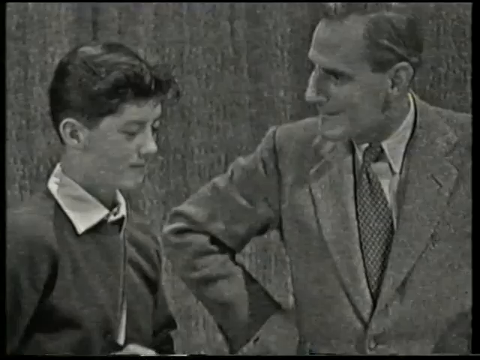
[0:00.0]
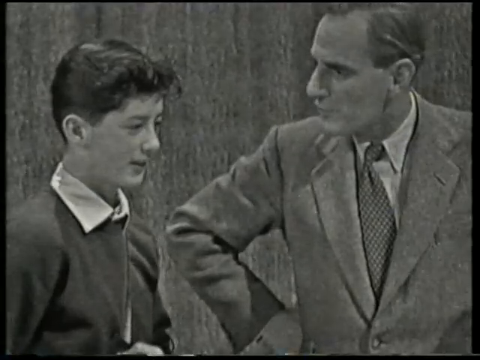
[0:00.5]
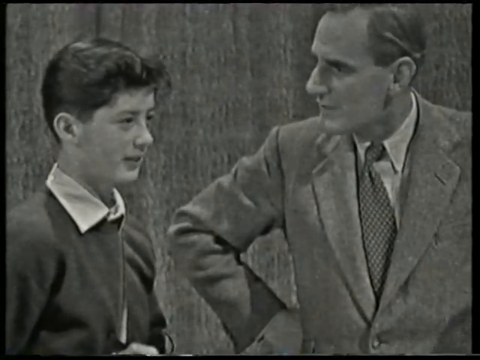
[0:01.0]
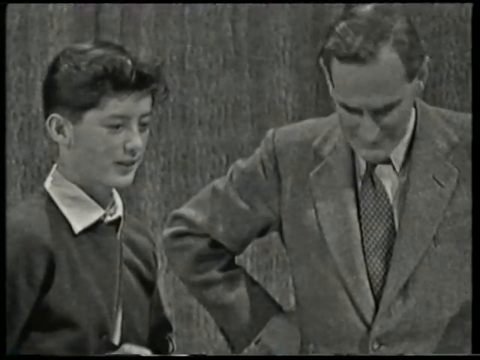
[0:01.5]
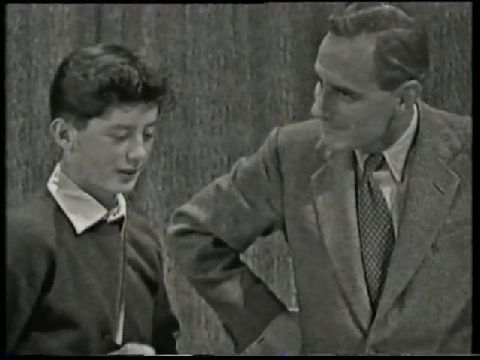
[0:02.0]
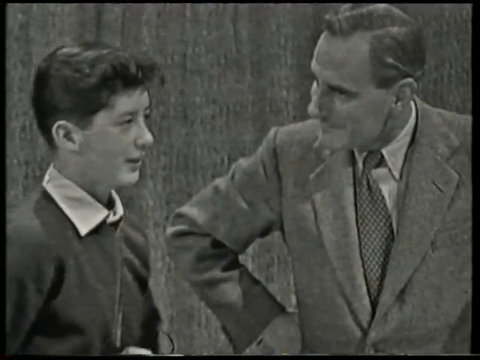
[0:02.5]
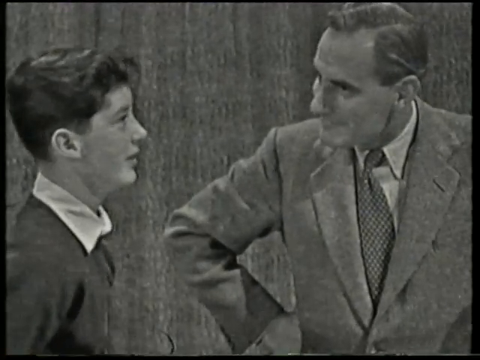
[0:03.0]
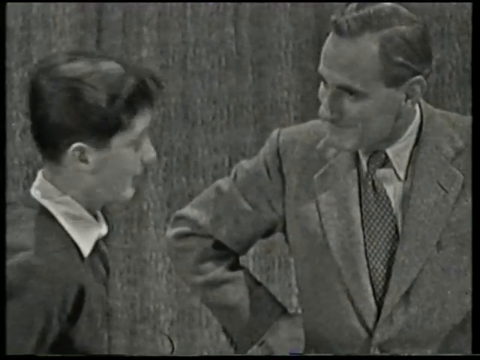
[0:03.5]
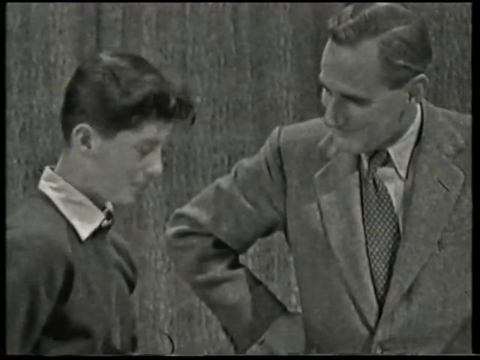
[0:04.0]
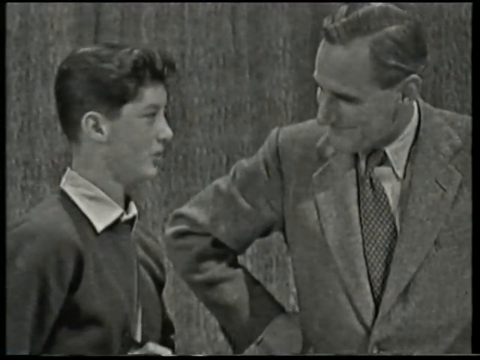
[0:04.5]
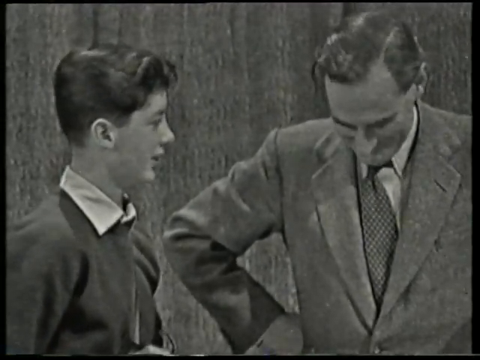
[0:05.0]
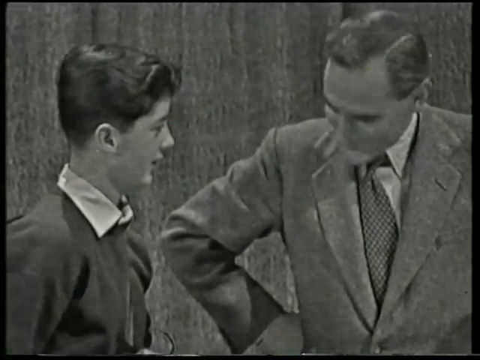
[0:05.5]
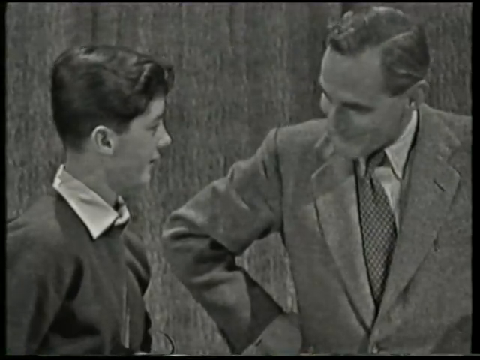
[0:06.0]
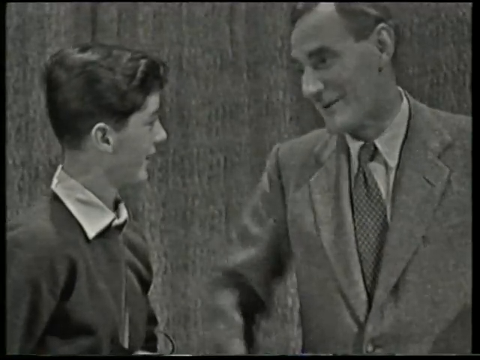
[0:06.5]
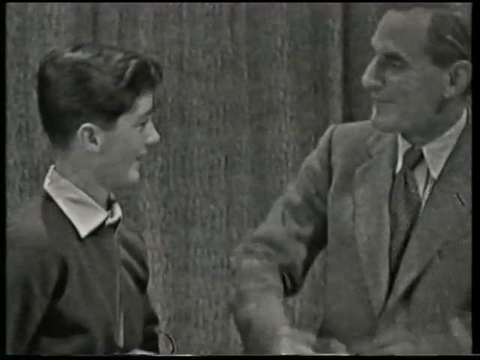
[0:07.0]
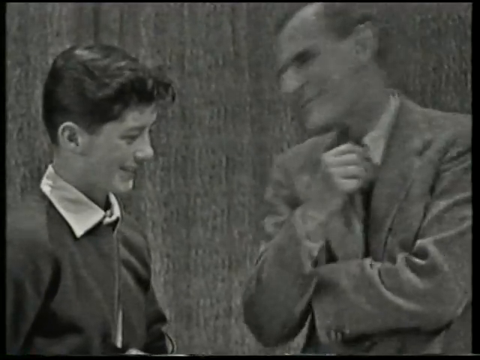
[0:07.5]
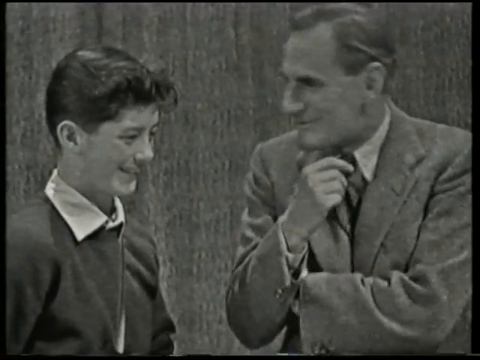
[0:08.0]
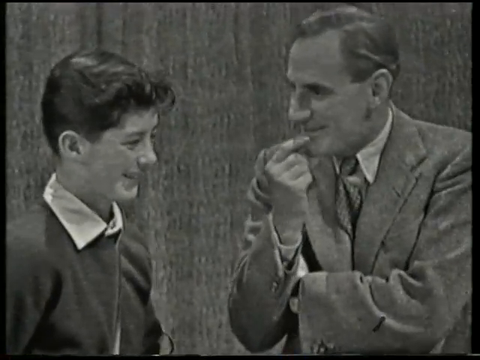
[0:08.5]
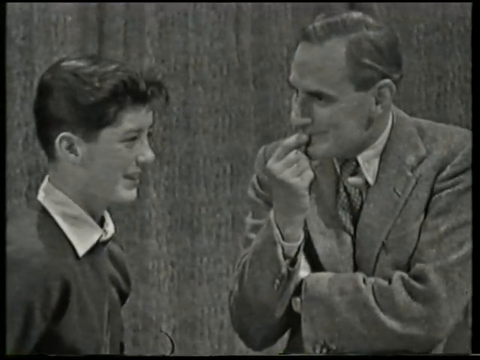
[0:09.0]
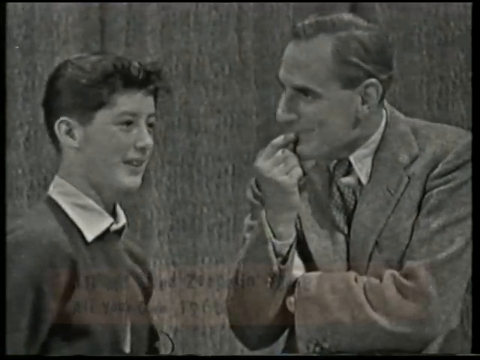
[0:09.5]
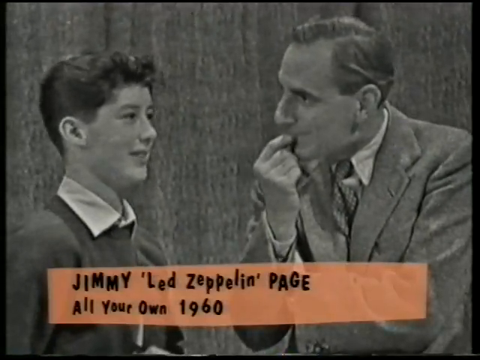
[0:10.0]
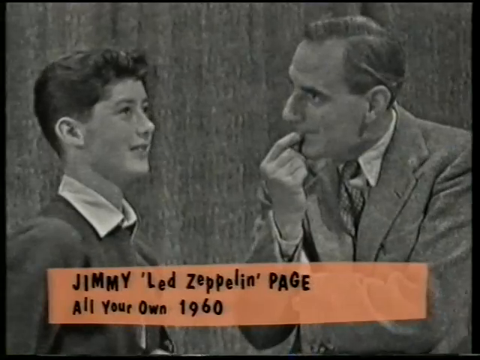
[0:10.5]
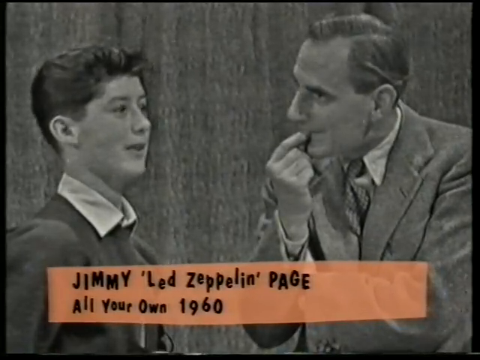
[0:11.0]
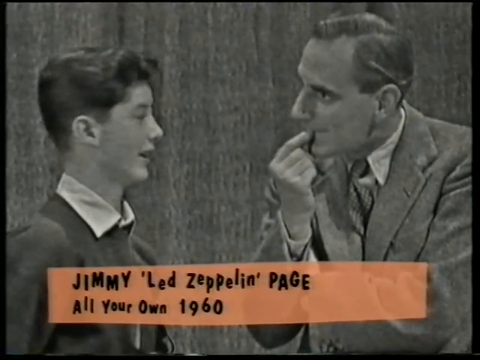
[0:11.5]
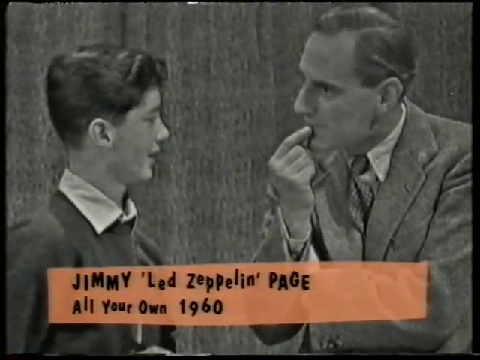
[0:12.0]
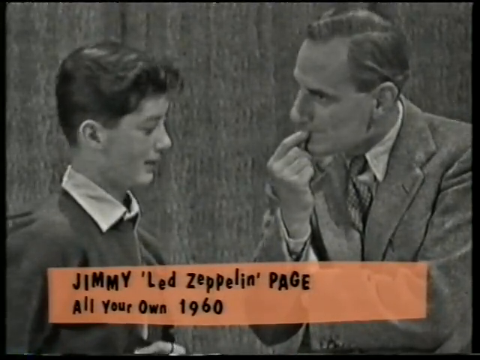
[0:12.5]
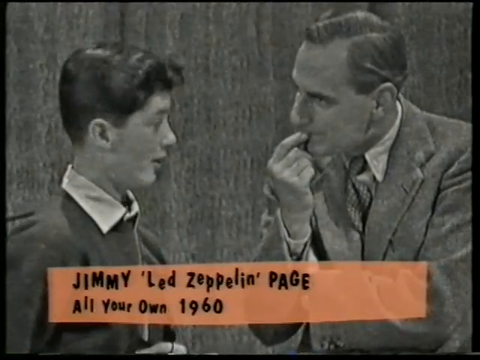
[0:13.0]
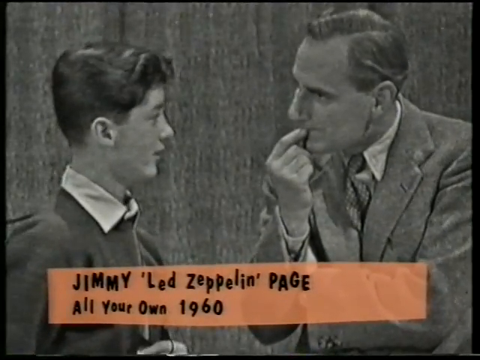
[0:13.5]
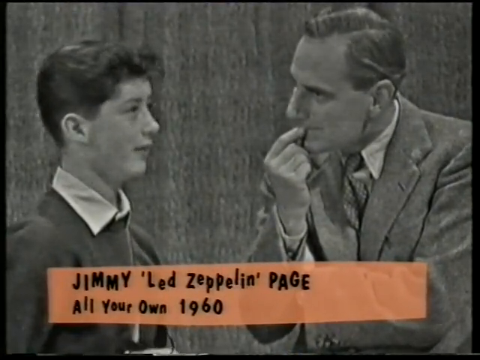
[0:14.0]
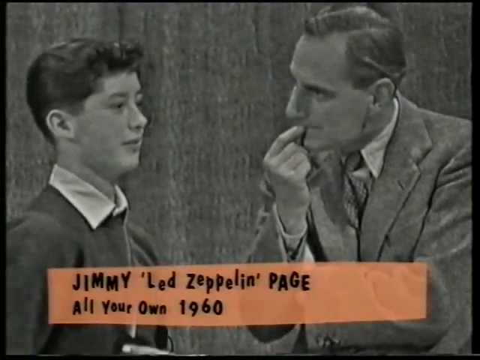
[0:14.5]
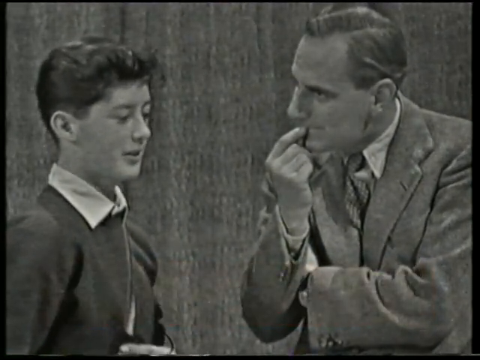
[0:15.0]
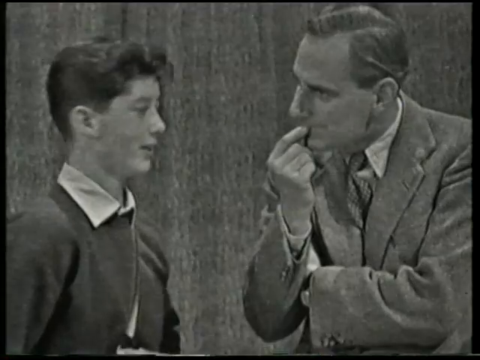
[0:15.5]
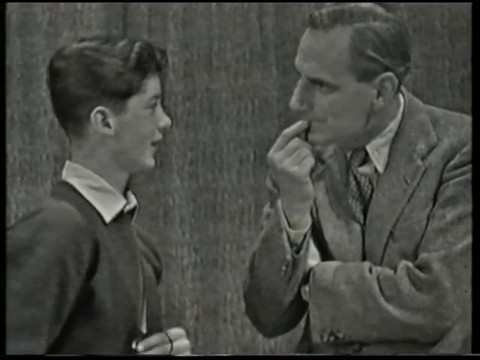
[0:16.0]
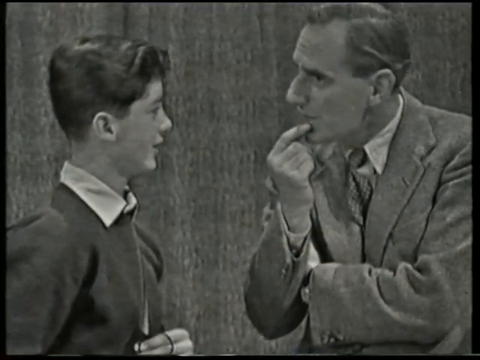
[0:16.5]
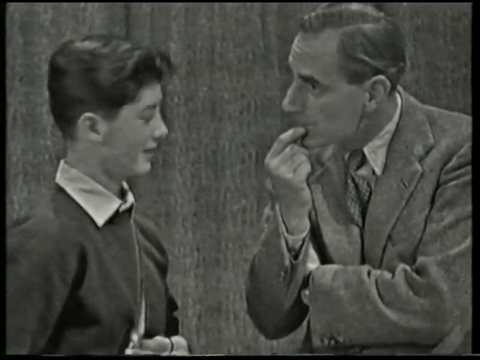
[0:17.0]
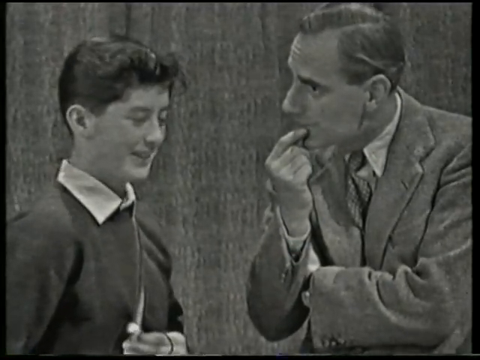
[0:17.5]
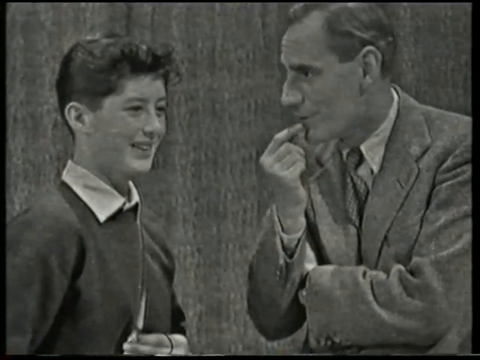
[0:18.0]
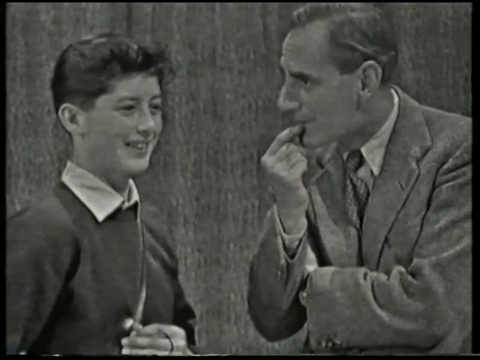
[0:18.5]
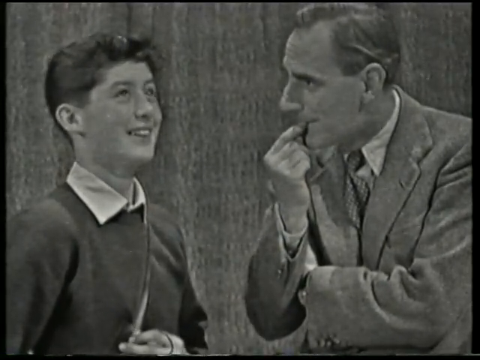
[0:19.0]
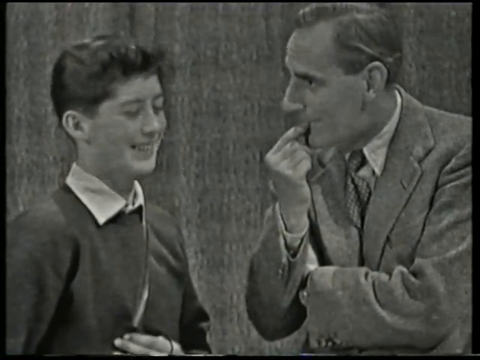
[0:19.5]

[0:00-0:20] This is a clip from a BBC show called All Your Own. A young Jimmy Page stands on the left side of the frame and the host stands on the right. The host wears a blazer and tie, while Jimmy Page, who has very short hair, wears a collared shirt under what looks like a sweater. The footage is in black and white and is from 1960. The host interviews Jimmy Page in what looks like friendly banter. A banner appears at the bottom reading "Jimmy Led Zeppelin Page, All Your Own". During the conversation the host stares directly at Jimmy Page, who has a smile on his face, and at one point the host puts his hand under his chin in an inquisitive way.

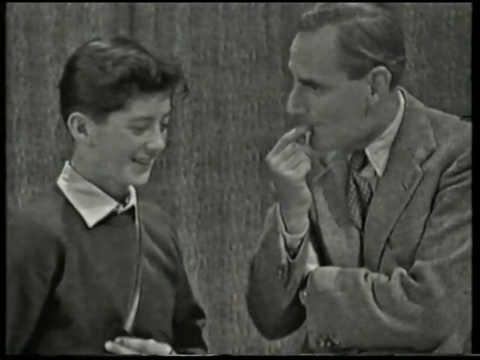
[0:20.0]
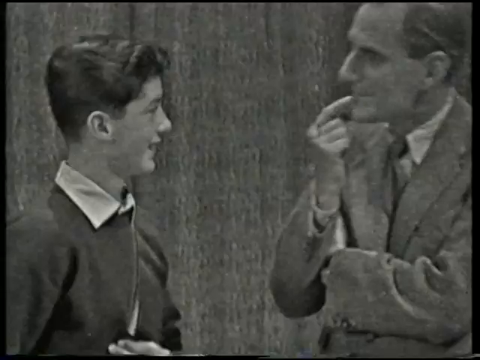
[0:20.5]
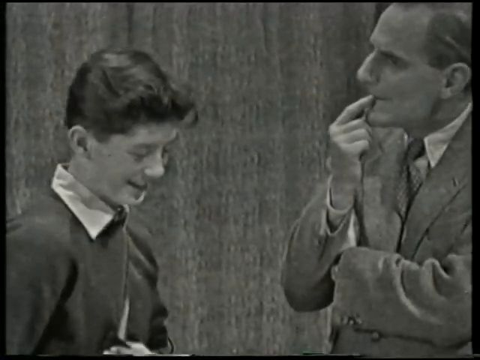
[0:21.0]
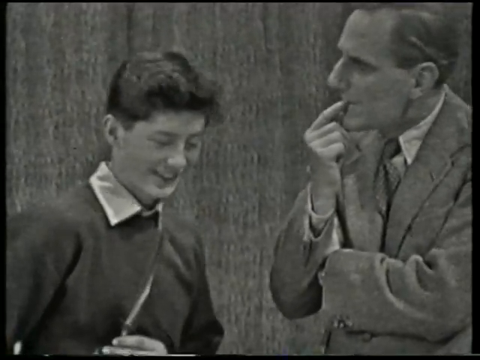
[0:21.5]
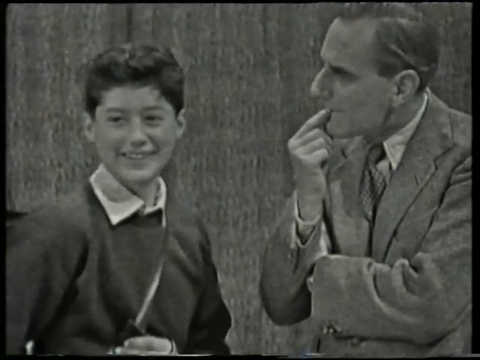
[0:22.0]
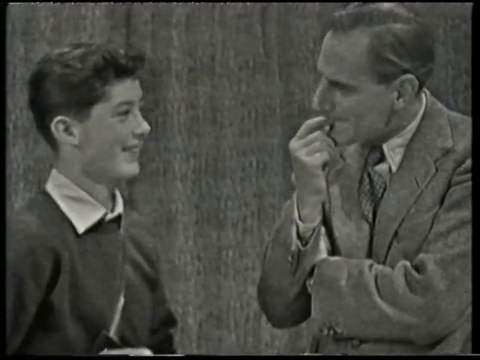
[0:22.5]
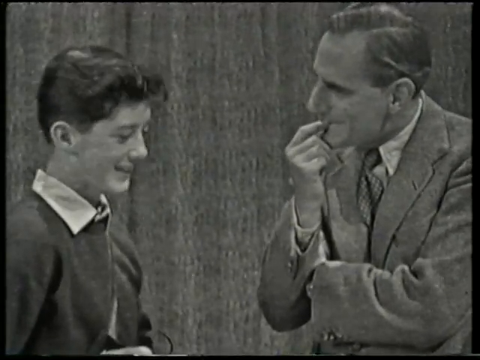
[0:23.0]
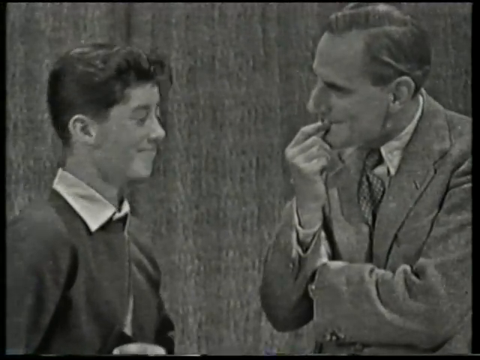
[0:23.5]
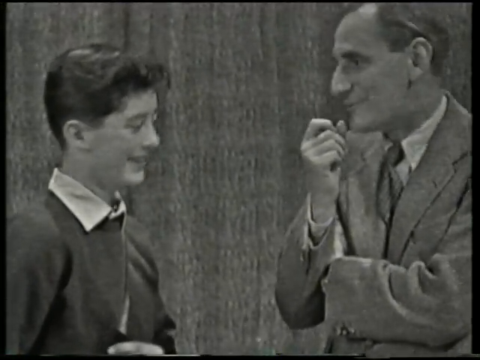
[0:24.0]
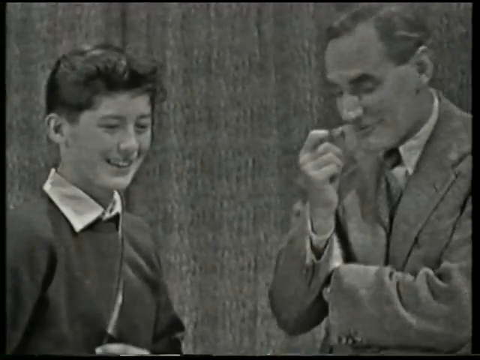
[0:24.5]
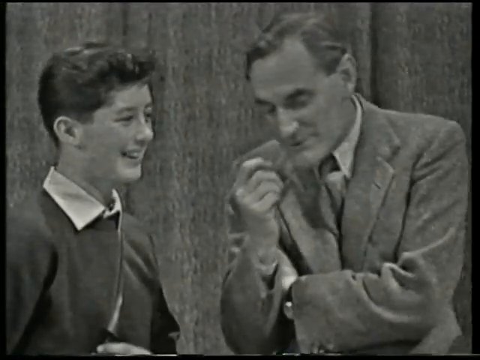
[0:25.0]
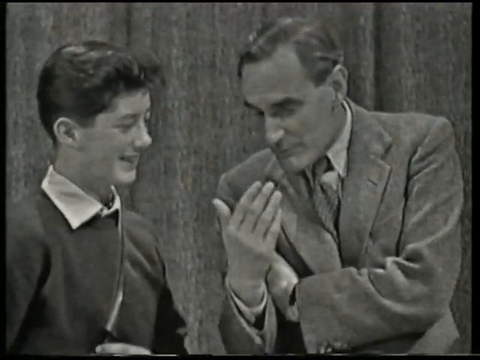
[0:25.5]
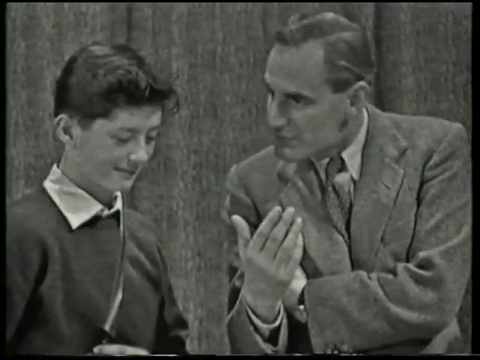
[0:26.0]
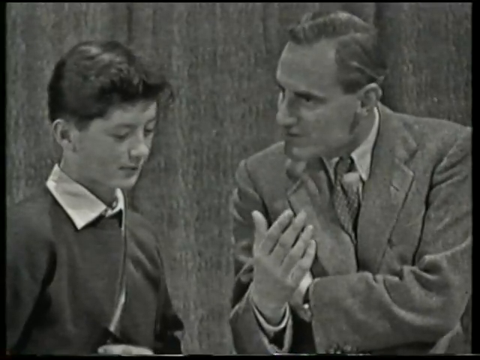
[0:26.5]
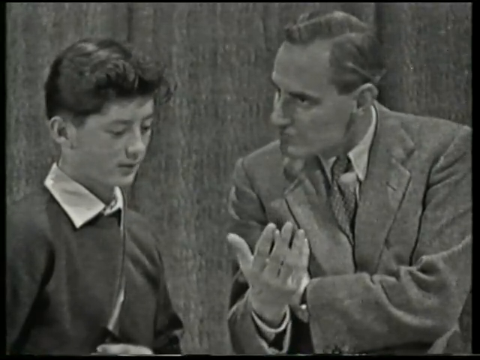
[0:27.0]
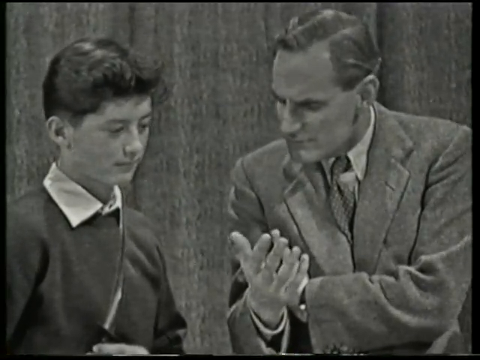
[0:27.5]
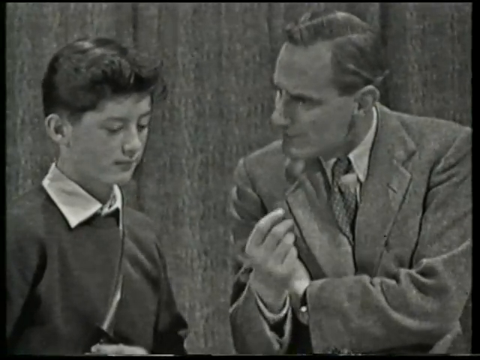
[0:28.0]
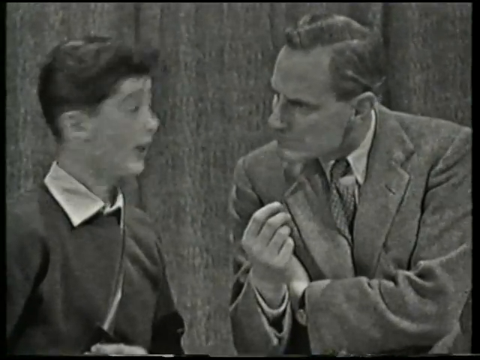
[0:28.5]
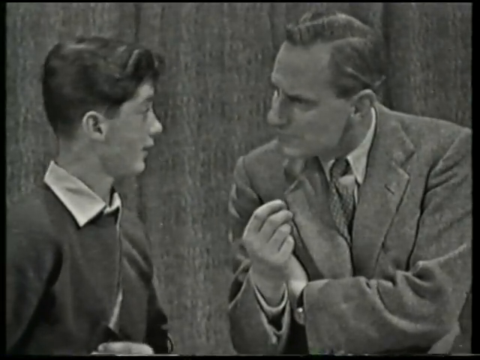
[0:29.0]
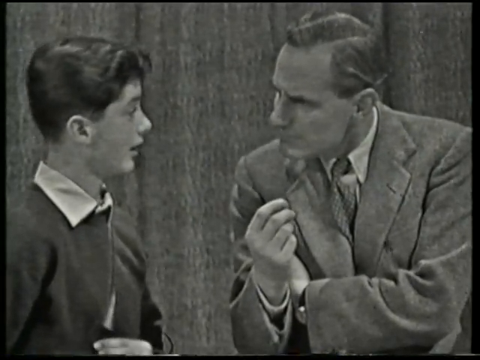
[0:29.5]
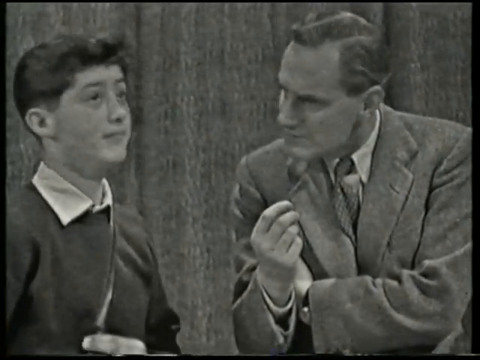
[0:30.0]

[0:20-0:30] Jimmy Page appears to have a guitar strap across his chest. The host puts his hand out and waves it a bit, and the two talk to each other for the next few seconds. The footage is in black and white. Towards the end, the host has his arms crossed across his chest. The camera does not move away from them and stays in place.